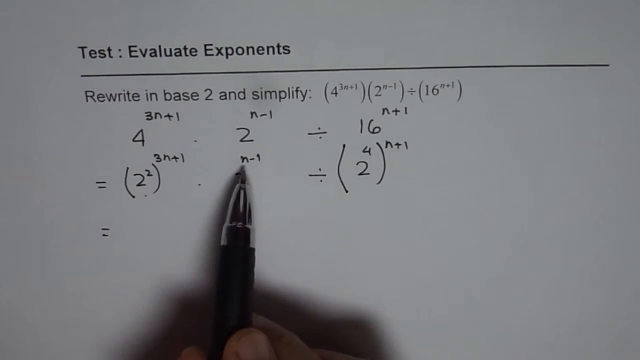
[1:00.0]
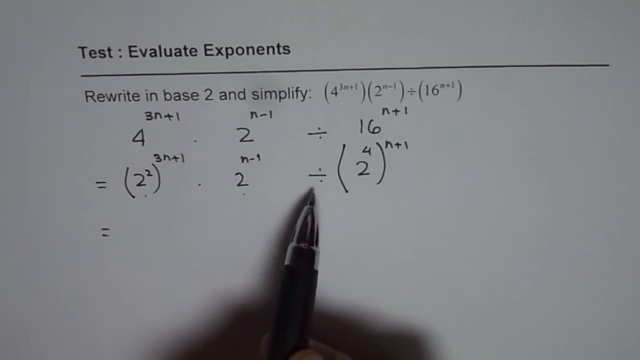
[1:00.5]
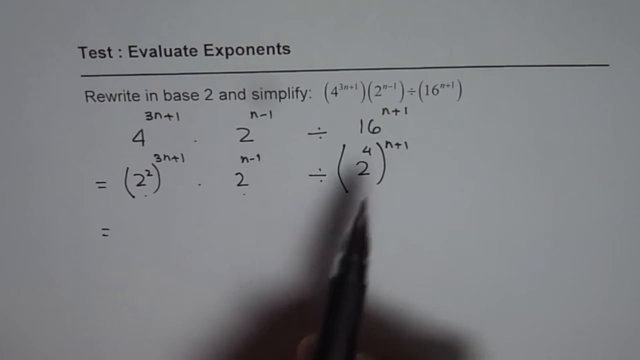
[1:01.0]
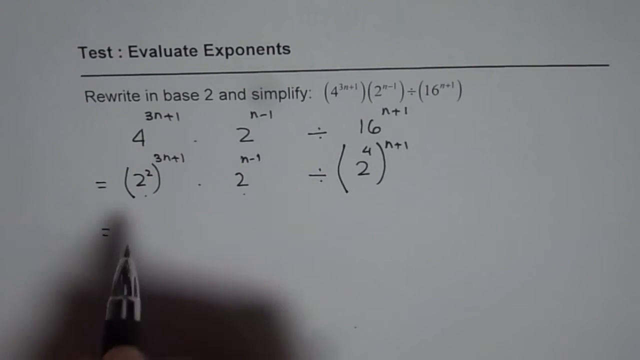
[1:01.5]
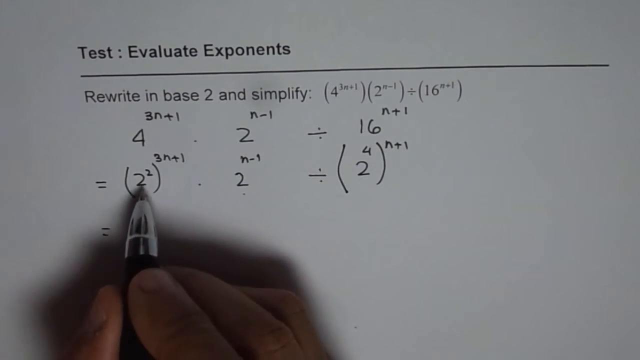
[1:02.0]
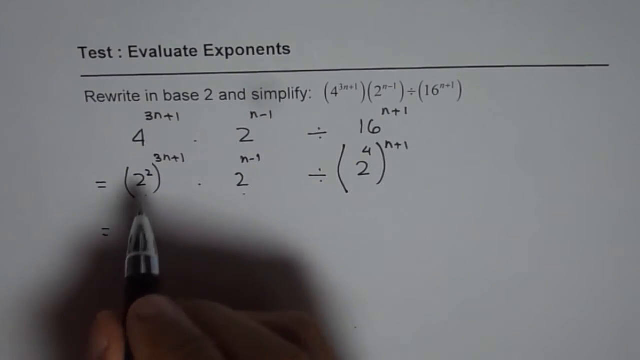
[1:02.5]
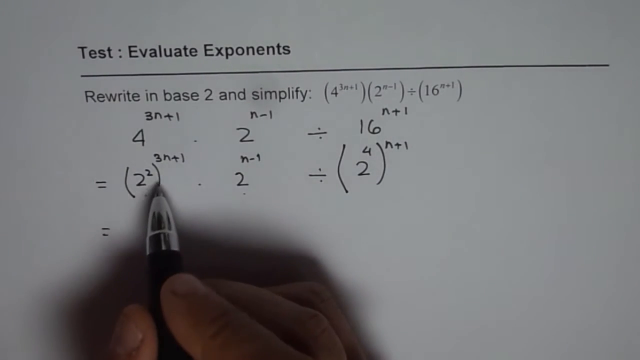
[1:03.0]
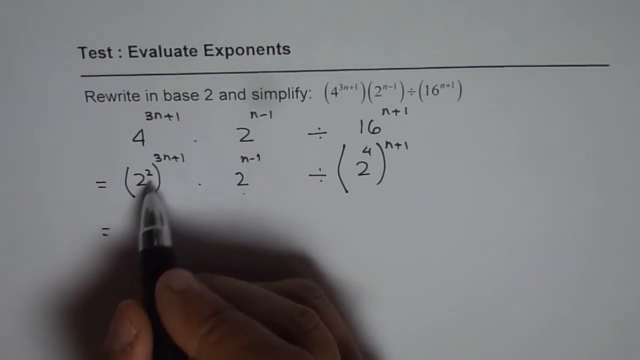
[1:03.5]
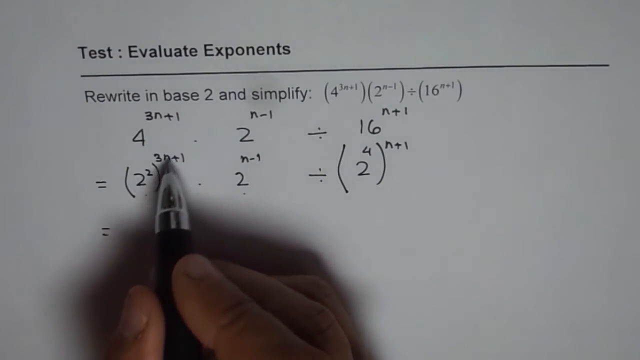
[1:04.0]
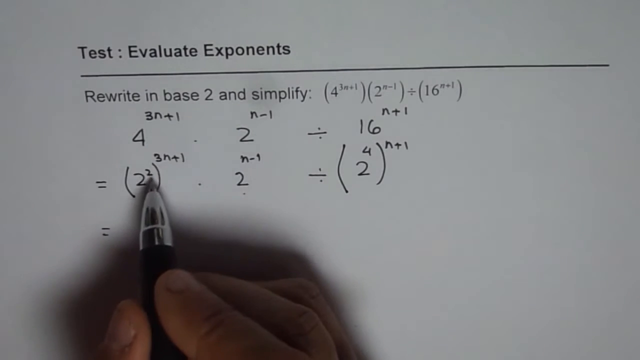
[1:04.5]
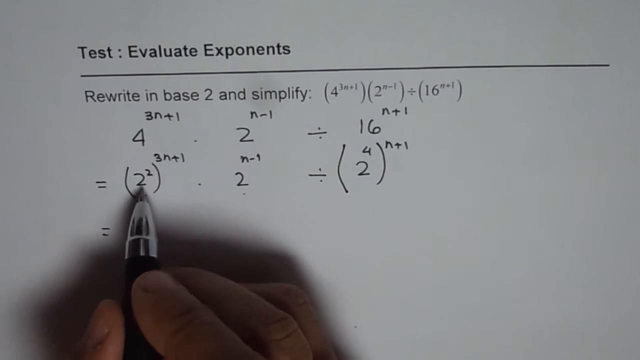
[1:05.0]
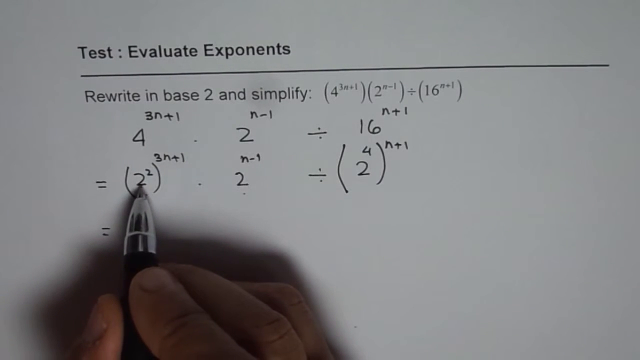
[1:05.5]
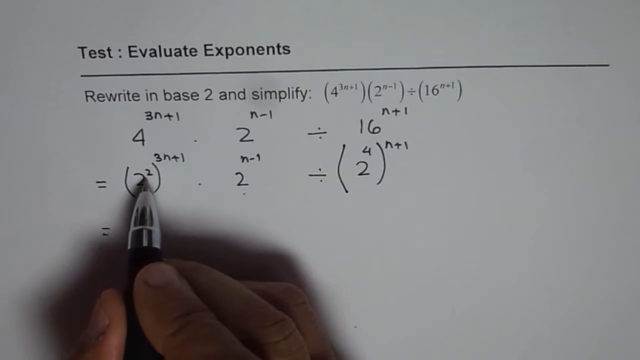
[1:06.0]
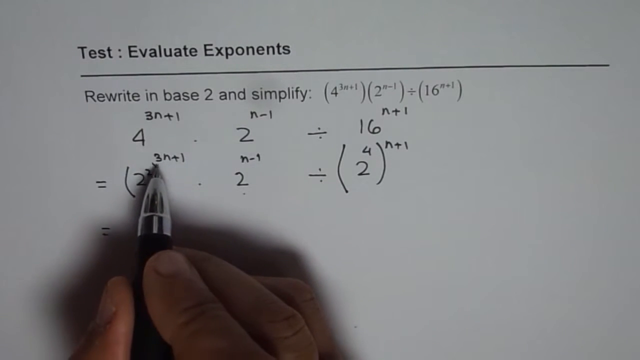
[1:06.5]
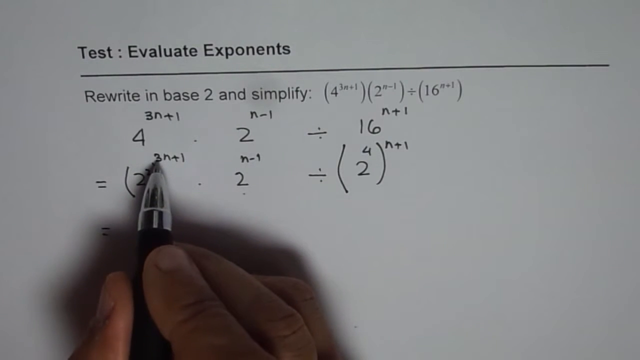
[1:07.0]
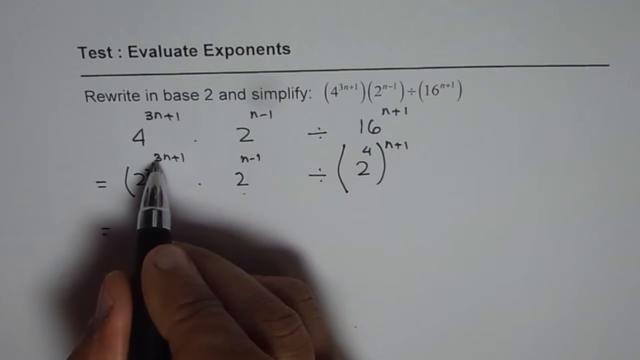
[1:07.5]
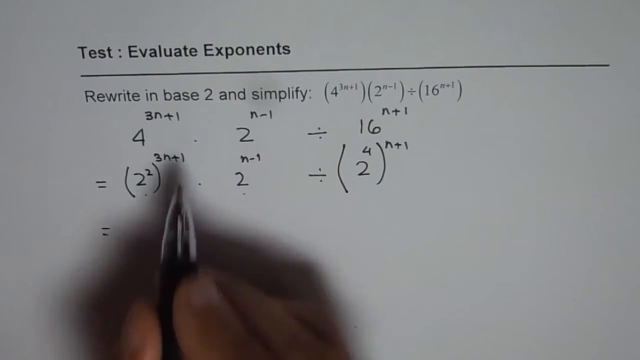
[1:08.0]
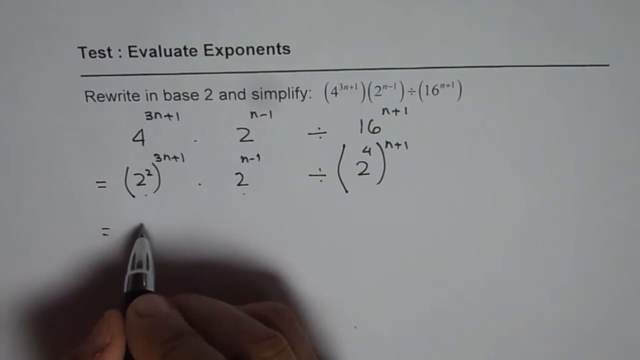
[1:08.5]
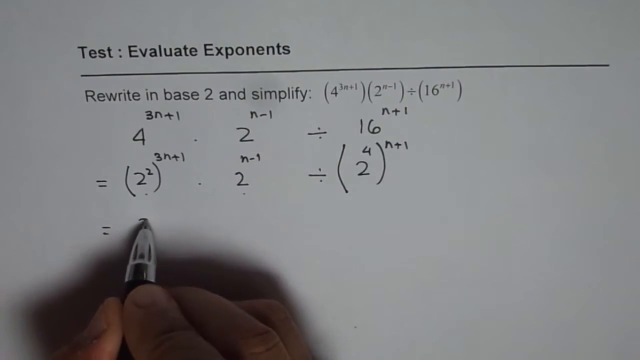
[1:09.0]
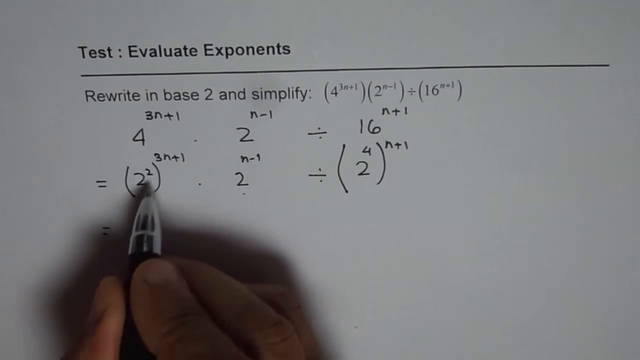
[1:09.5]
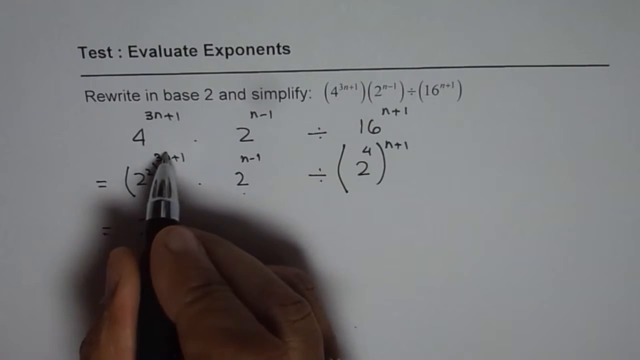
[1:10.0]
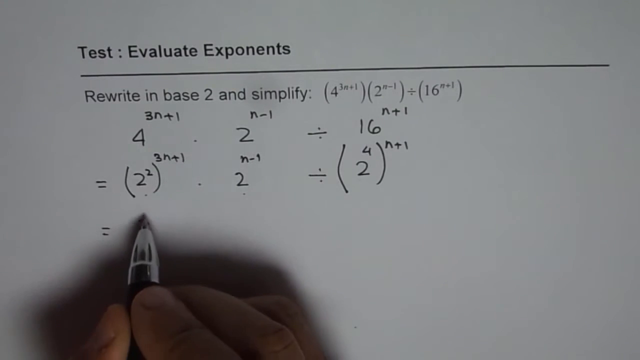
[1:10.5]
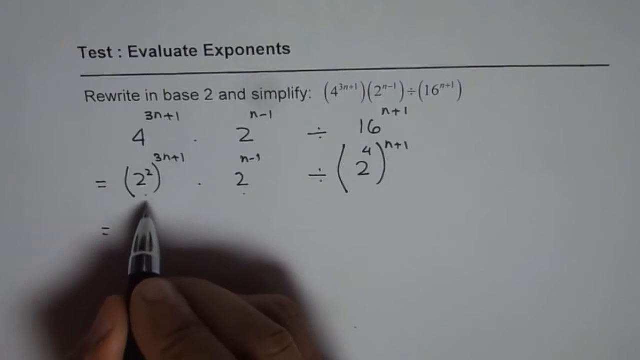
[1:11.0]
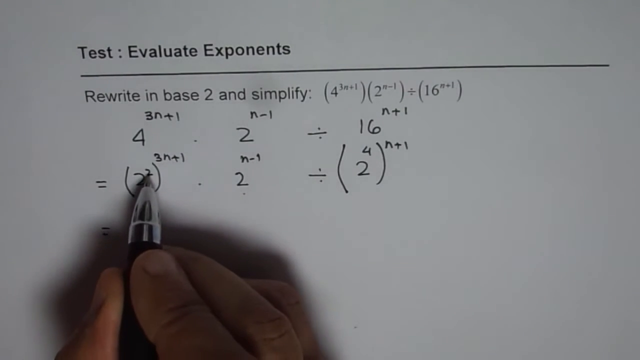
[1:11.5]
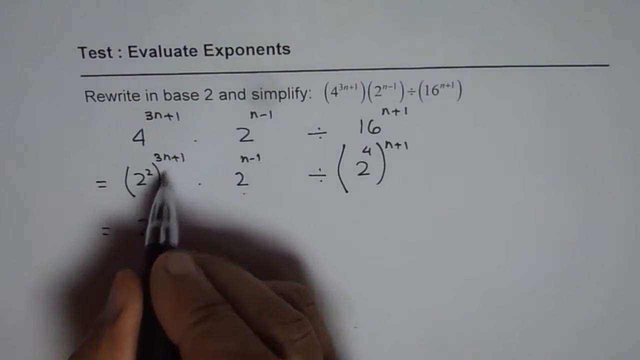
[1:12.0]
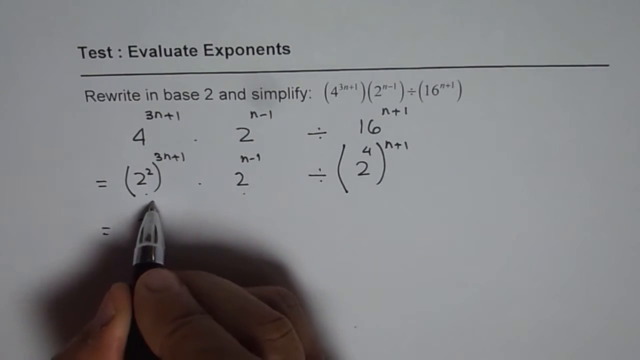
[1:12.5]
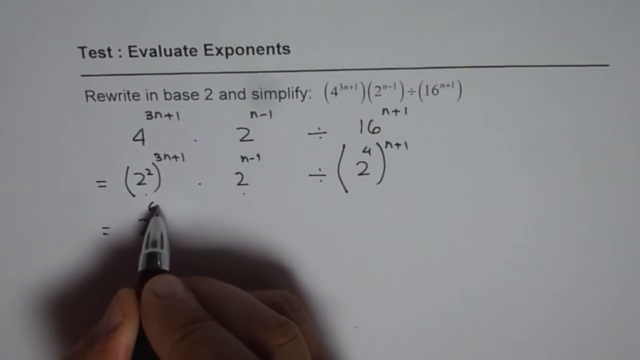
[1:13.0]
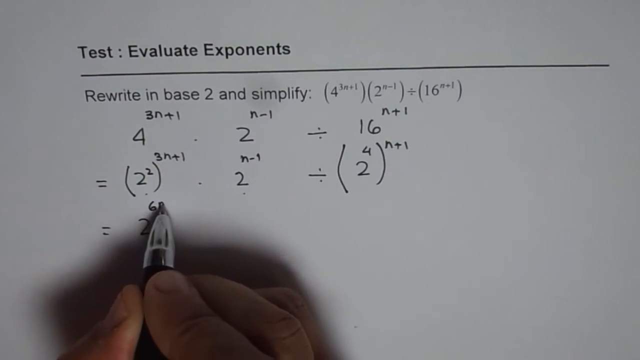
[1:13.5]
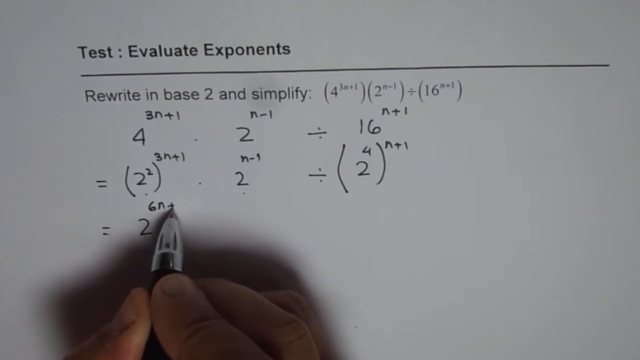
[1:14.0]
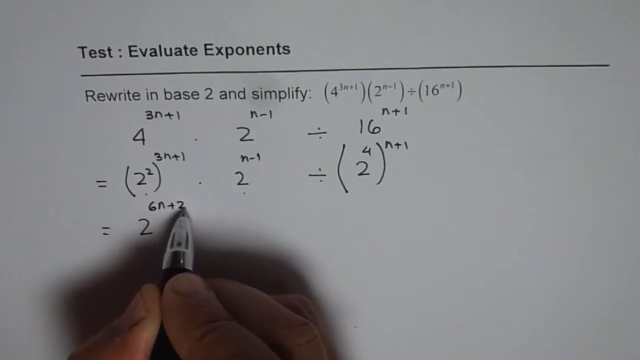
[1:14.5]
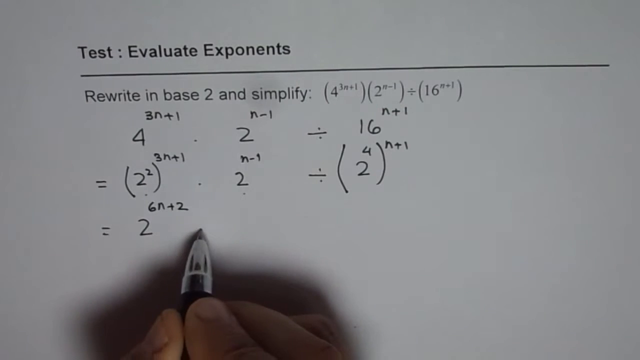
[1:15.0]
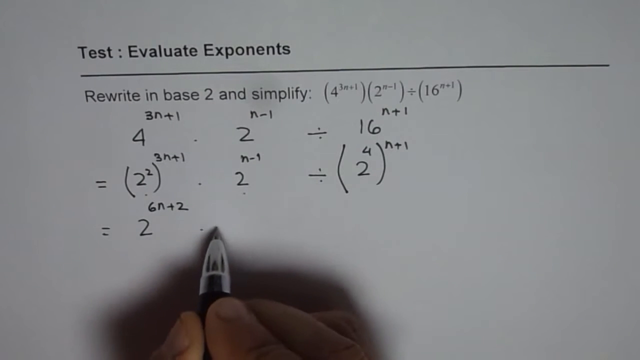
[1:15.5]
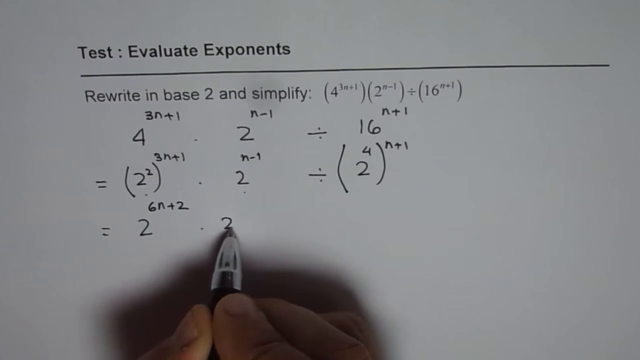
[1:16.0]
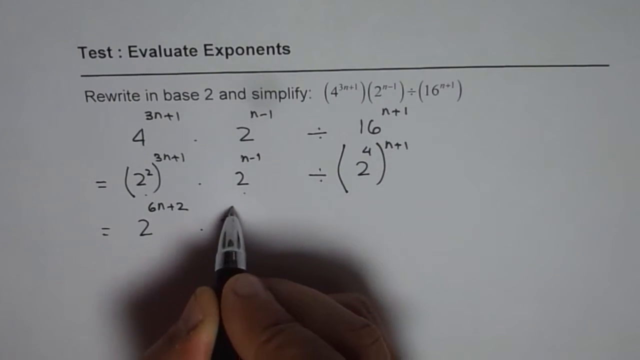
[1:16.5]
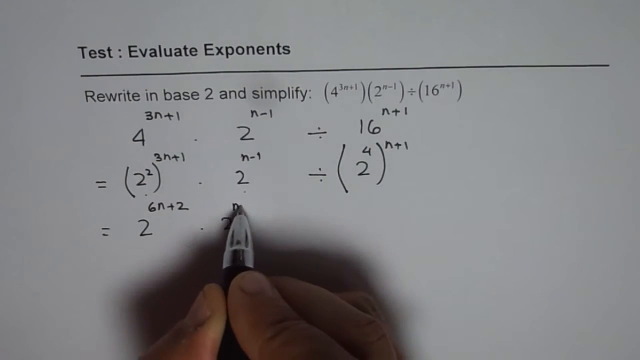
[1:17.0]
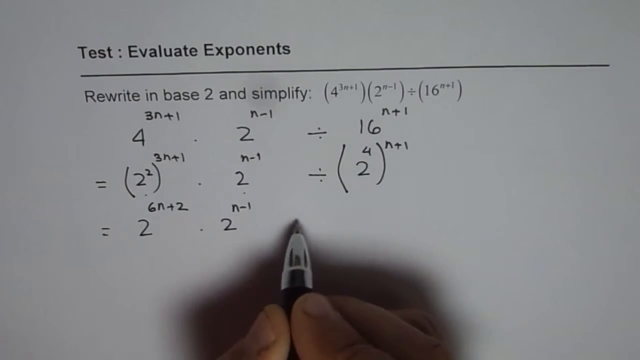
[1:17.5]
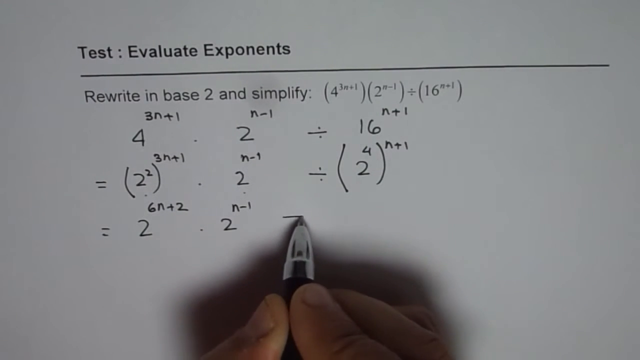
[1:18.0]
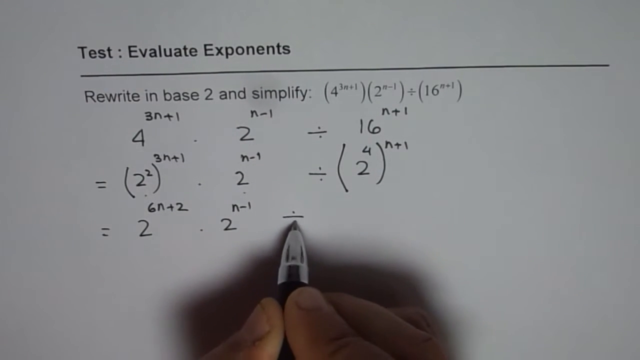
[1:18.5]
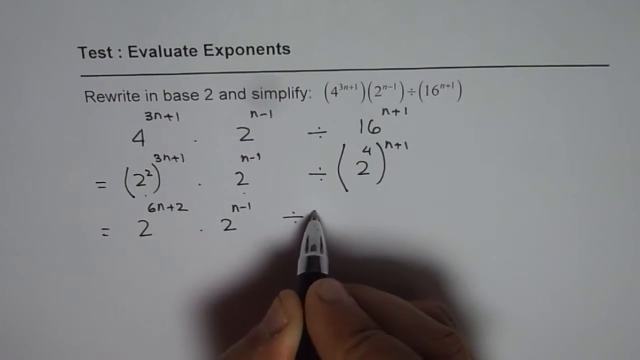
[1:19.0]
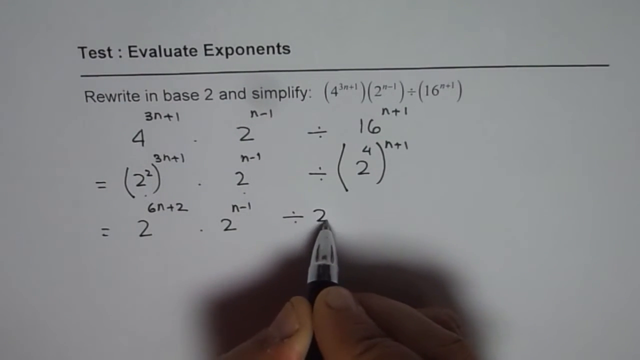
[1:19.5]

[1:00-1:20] A white piece of paper has bold black text at the top reading "test: evaluate exponents," with a line going across the paper. Underneath it says "rewrite in base two and simplify," then a colon and a formula. A person holds a pen at the bottom of the screen and seems to have written some numbers in black ink. They start a third line, writing an equals sign, then point at the second line, at the number 2 whose exponent has a 2 in it, and then at the number 3. Underneath, they write the number 2 with 6n + 2 above it. To the right they write another 2 with n − 1 above it, then a division sign to the right of that. After pointing at the line above, they write the number 2.